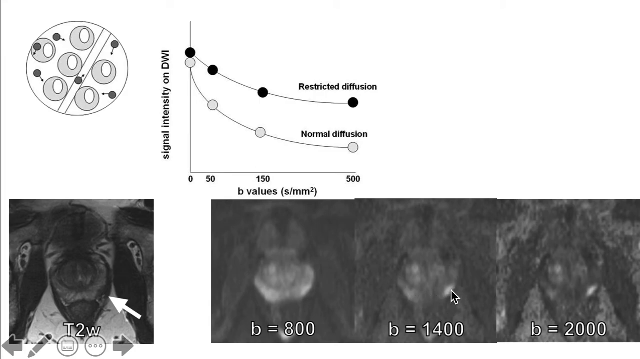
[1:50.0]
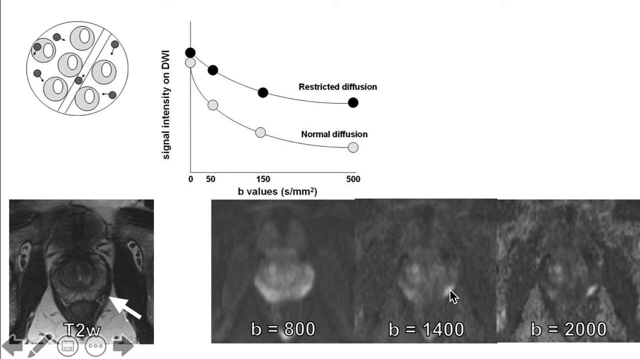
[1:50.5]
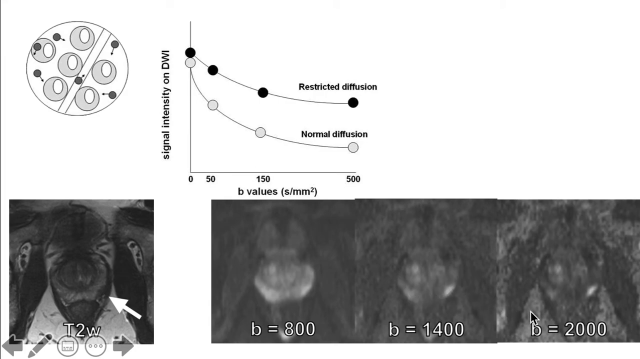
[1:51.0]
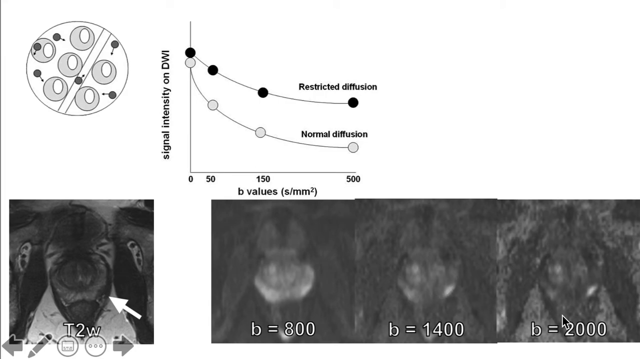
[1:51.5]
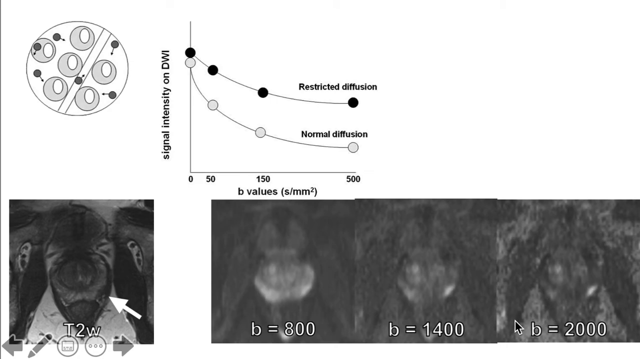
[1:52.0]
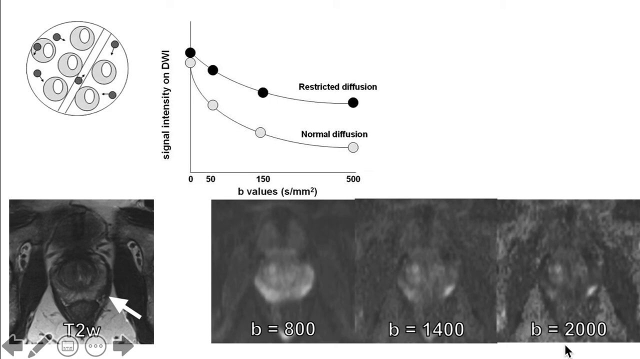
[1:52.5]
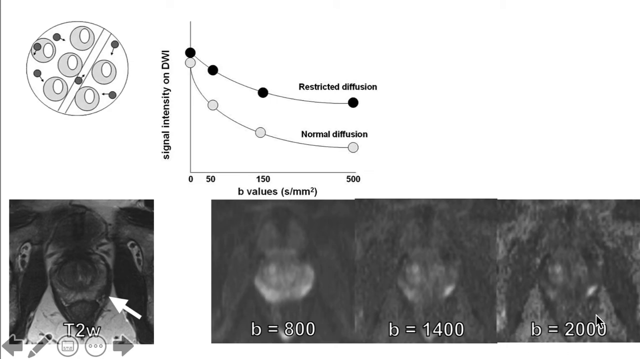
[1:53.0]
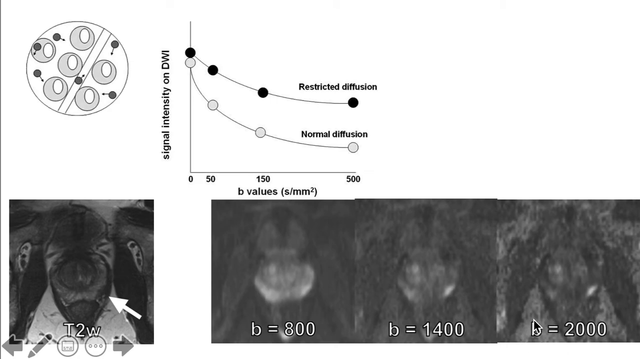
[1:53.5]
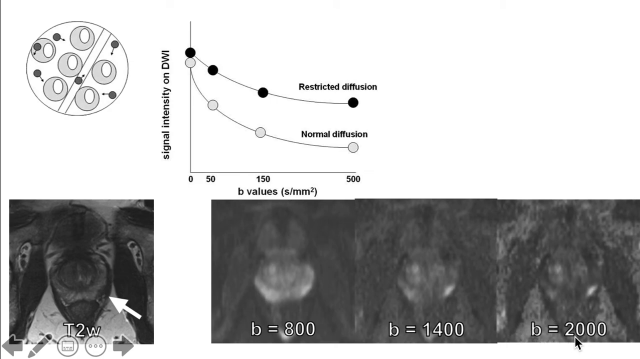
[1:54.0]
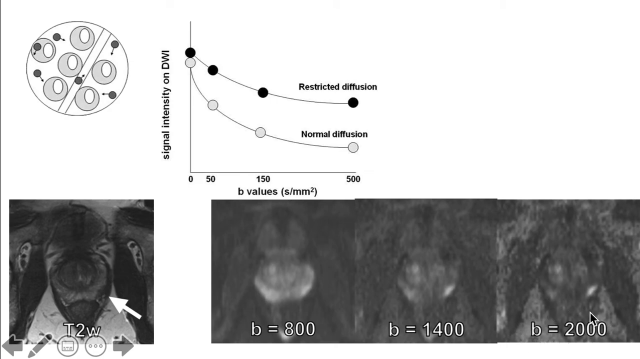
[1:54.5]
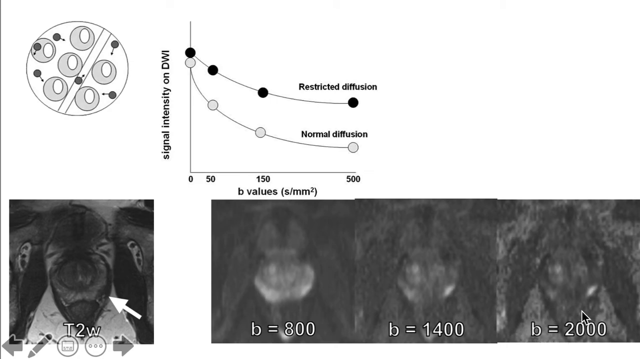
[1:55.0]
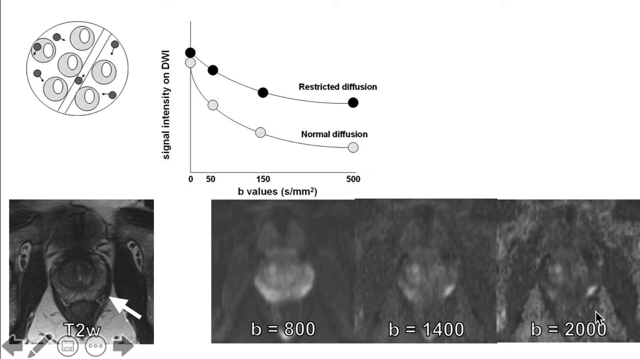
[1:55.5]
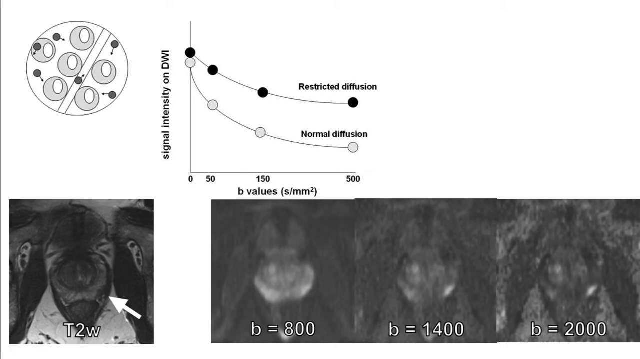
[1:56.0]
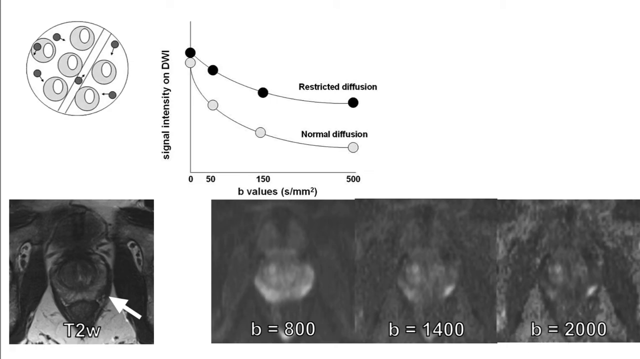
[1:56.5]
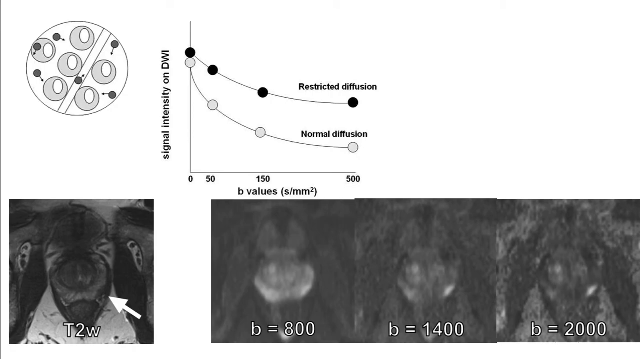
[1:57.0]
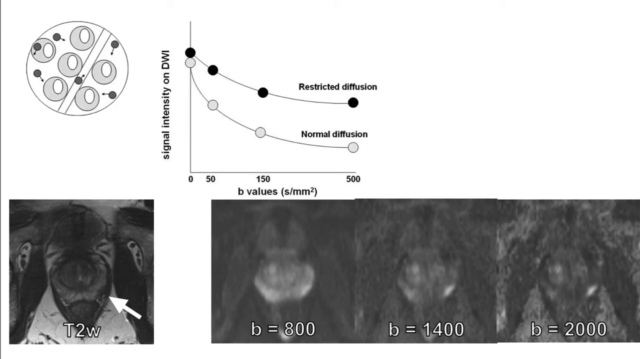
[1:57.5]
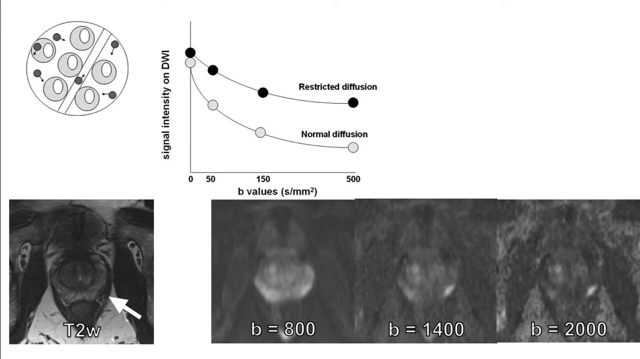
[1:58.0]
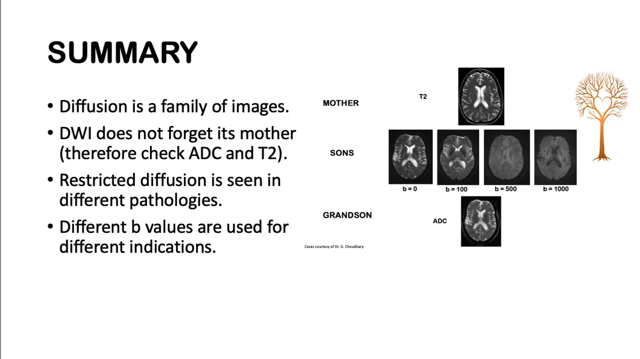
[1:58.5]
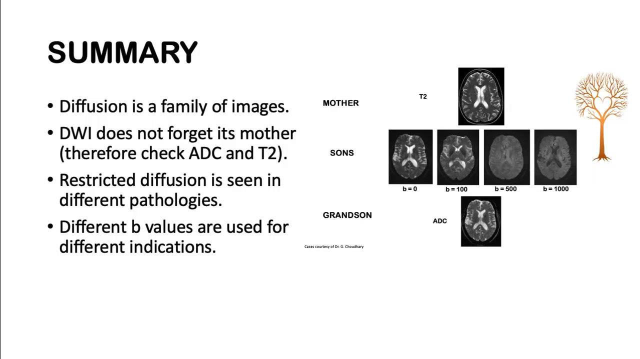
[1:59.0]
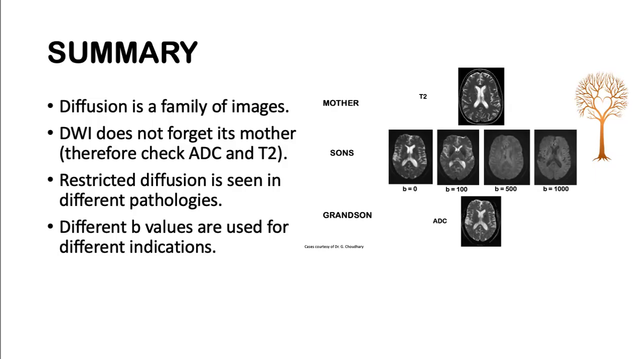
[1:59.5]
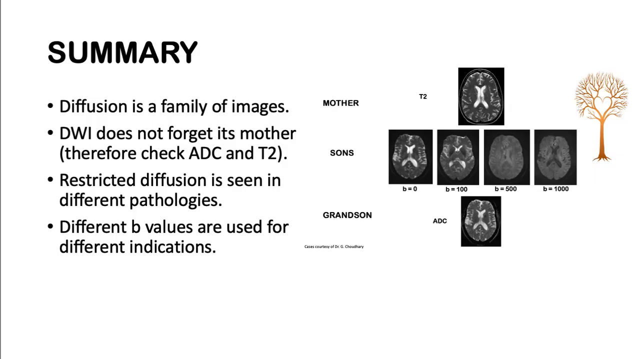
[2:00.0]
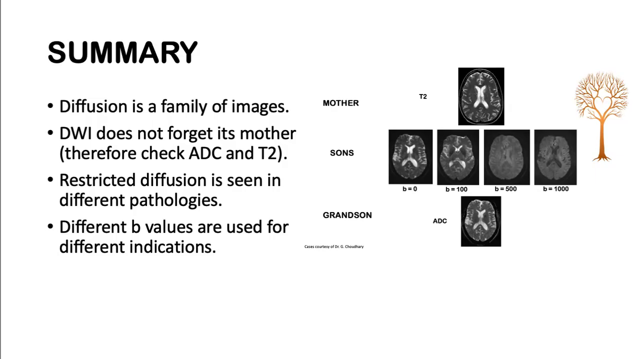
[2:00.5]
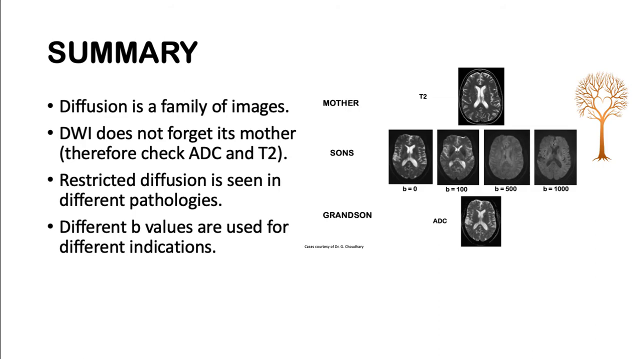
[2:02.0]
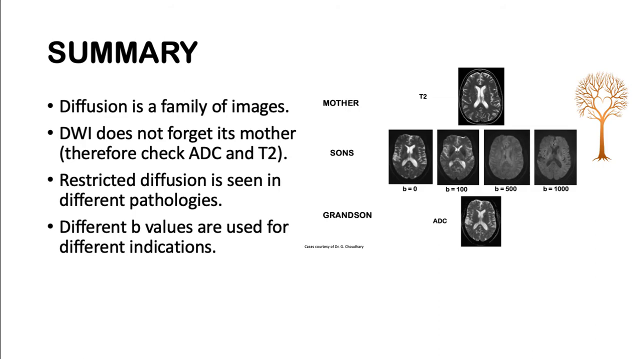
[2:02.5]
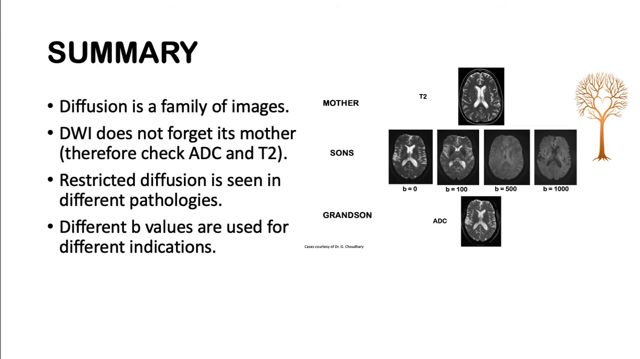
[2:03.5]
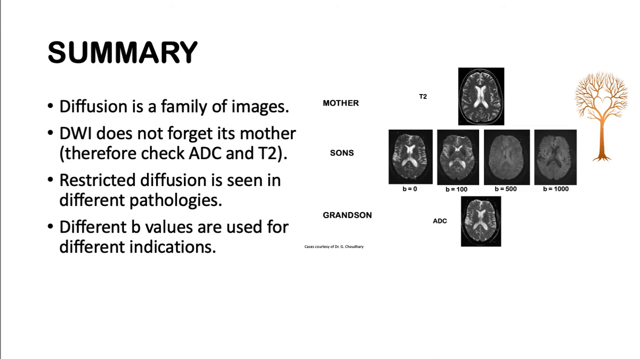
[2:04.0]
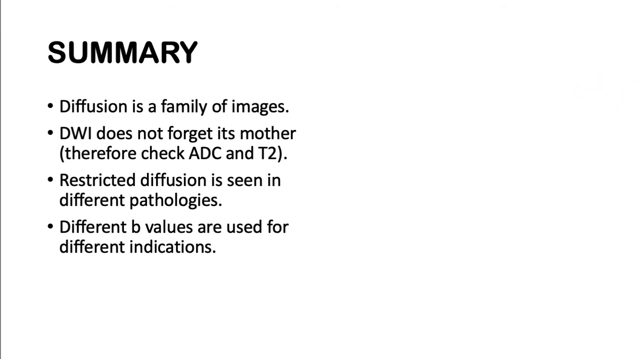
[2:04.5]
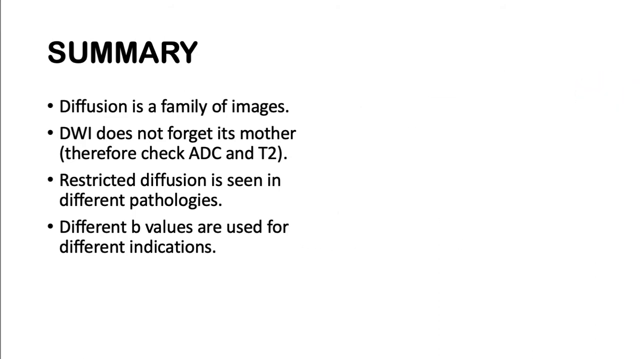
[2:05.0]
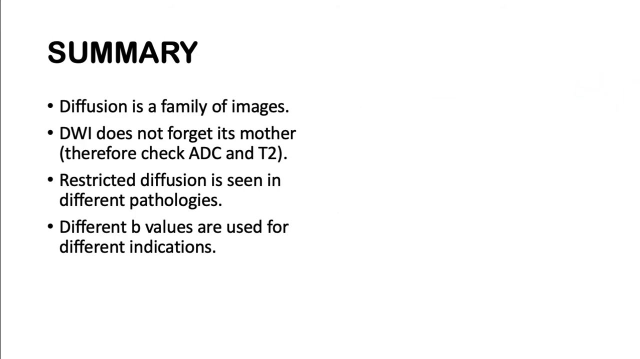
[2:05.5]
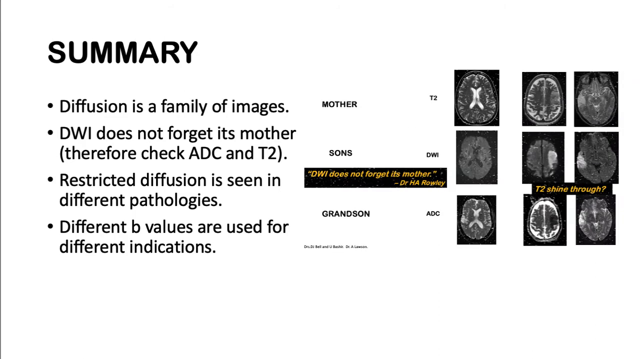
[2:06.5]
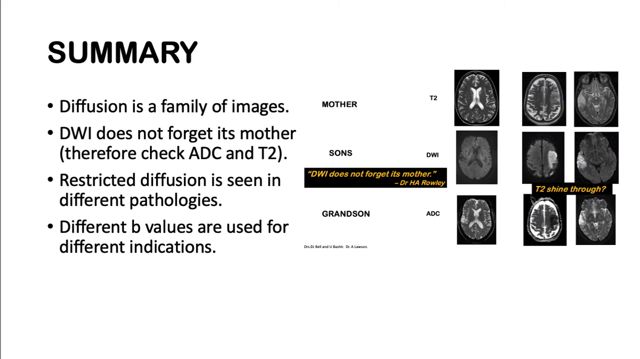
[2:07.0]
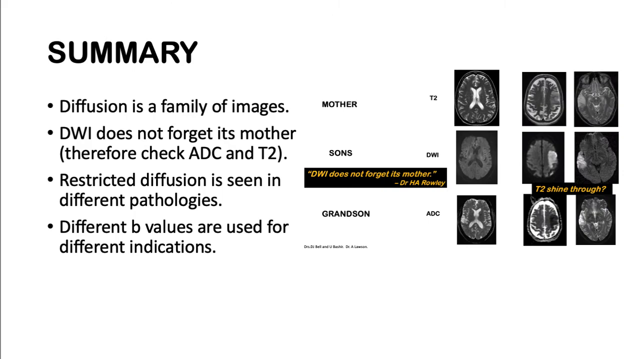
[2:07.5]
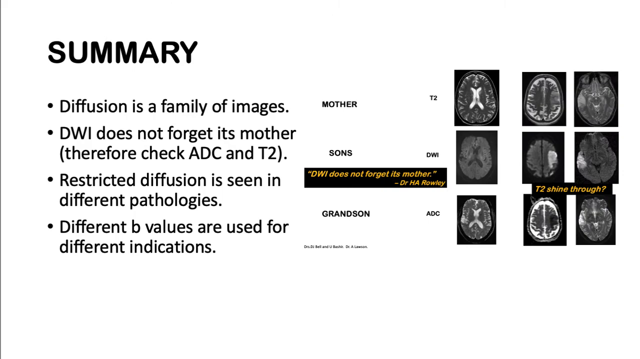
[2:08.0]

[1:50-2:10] A diagram has several black and white images that look as though they were taken with some sort of medical diagnostic machinery and appear to be x-rays or scans of some kind. It is likely a screen recording, as a black cursor circles around. The four scans are labeled "T2W," "B equals 800," "B equals 1400" and "B equals 2000." The next page says "summary" and has four bullet points: "diffusion is a family of images," "DWI does not forget its mother, therefore check ADC and T2," "restricted diffusion is seen in different pathologies," and "different B values are used for different indications." Everything is set against a white background, and there is an orange-colored tree.